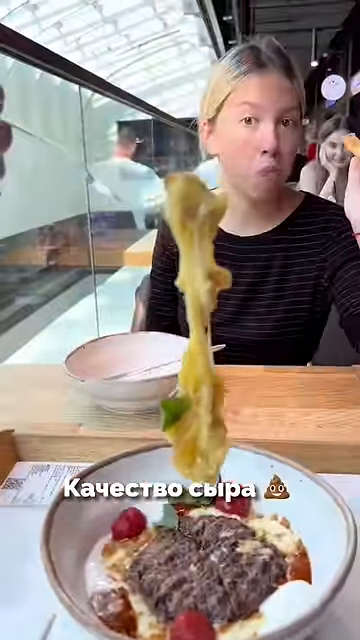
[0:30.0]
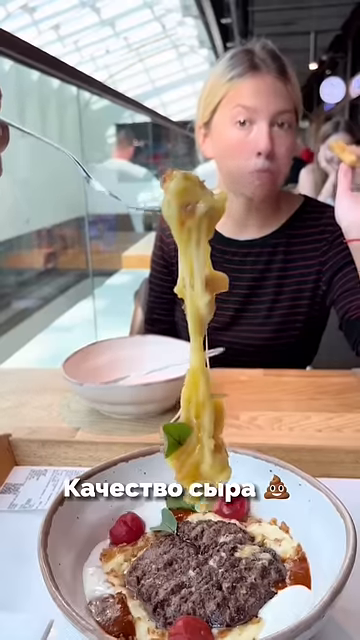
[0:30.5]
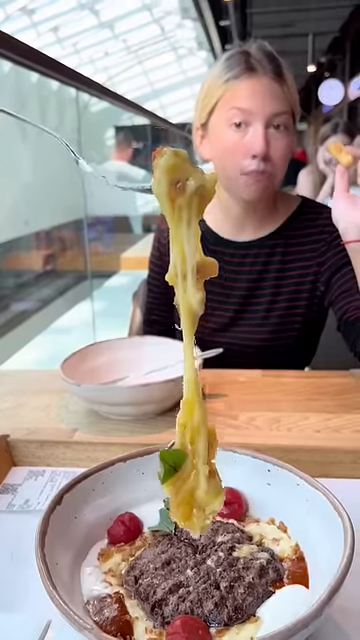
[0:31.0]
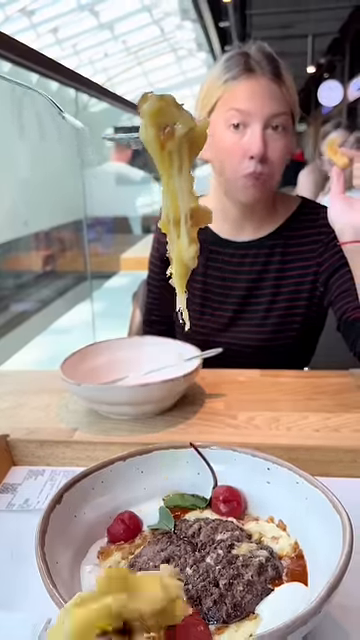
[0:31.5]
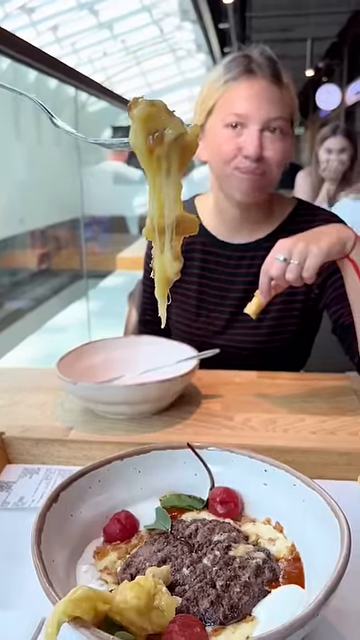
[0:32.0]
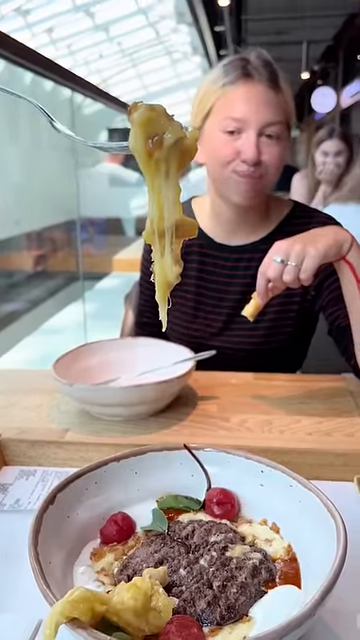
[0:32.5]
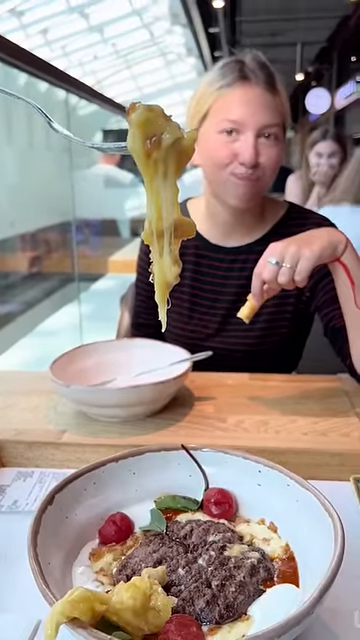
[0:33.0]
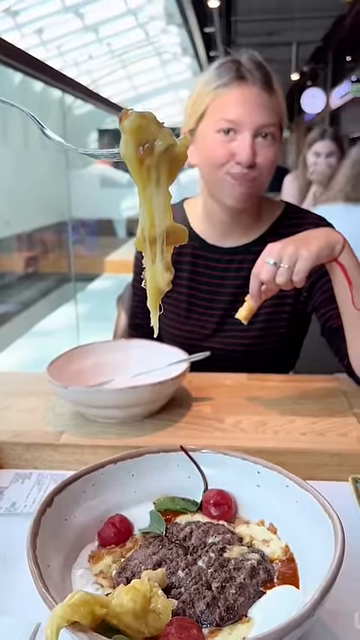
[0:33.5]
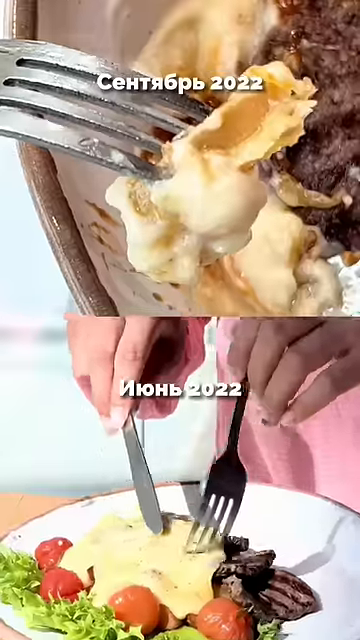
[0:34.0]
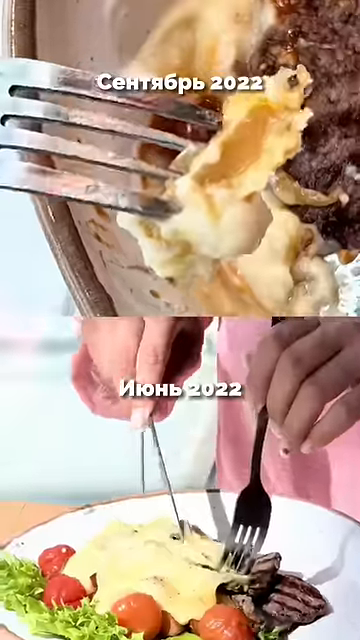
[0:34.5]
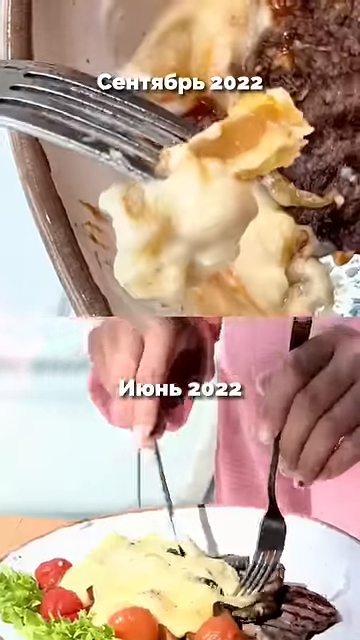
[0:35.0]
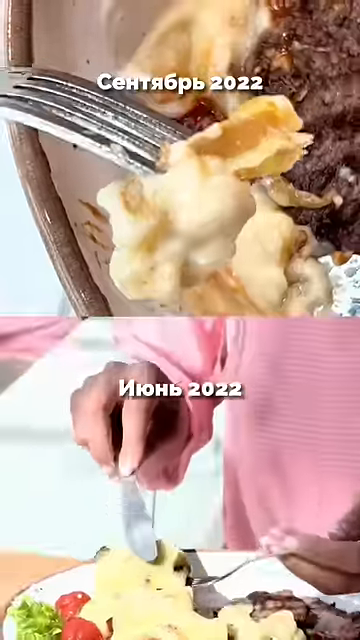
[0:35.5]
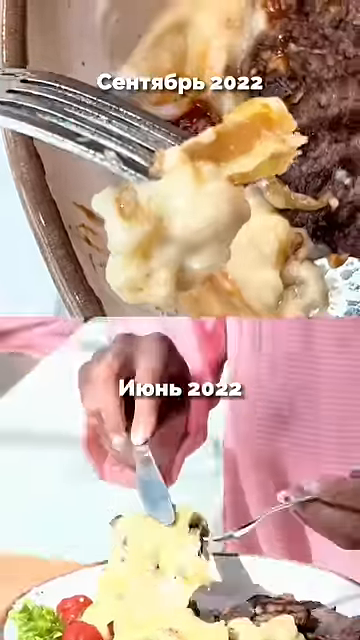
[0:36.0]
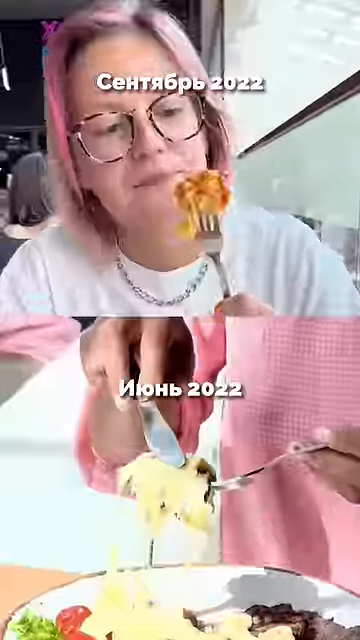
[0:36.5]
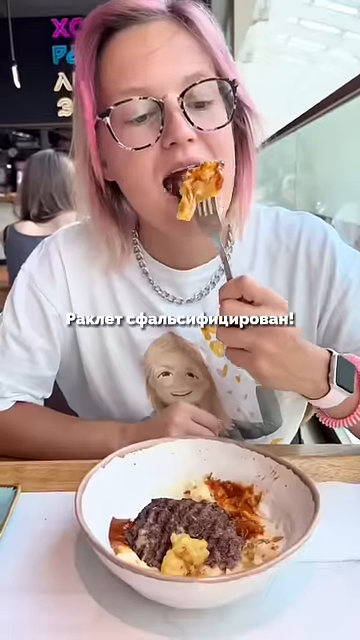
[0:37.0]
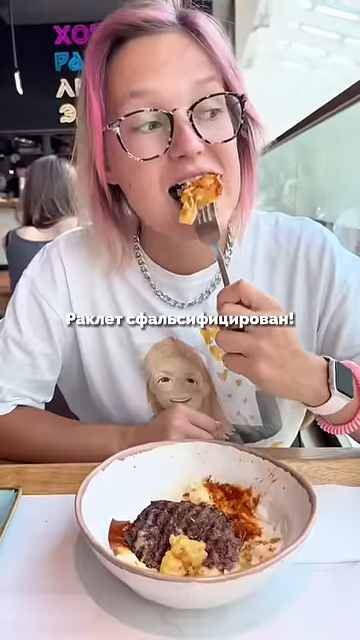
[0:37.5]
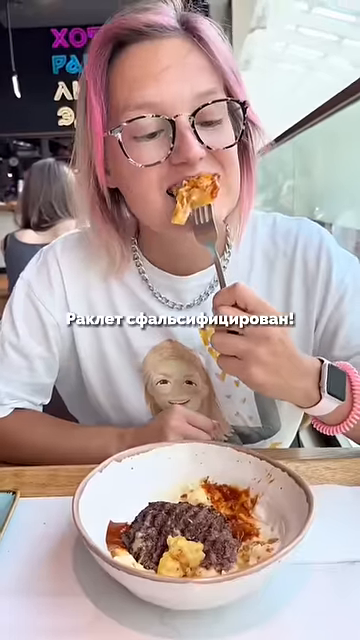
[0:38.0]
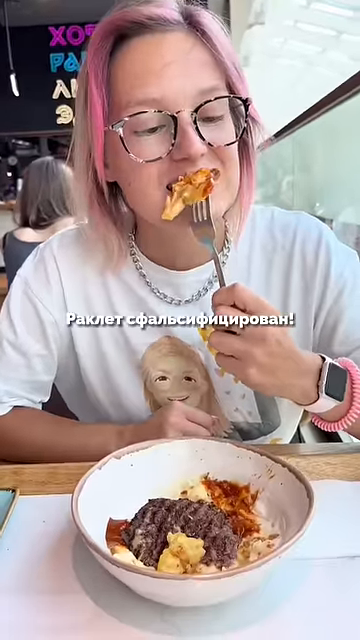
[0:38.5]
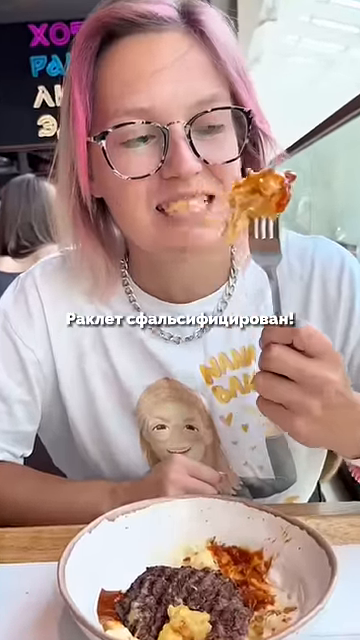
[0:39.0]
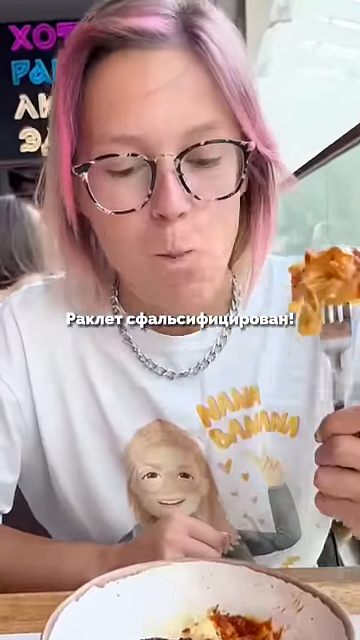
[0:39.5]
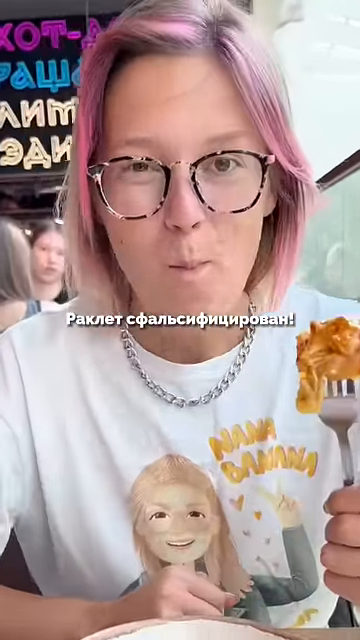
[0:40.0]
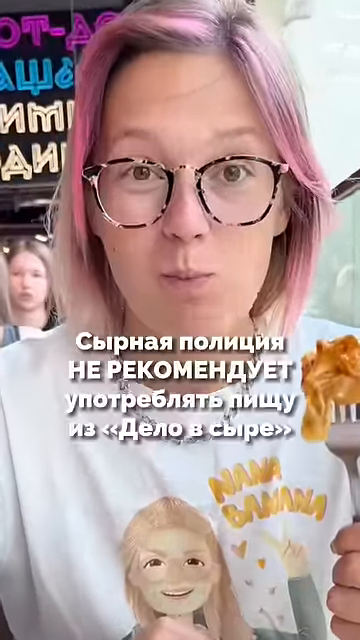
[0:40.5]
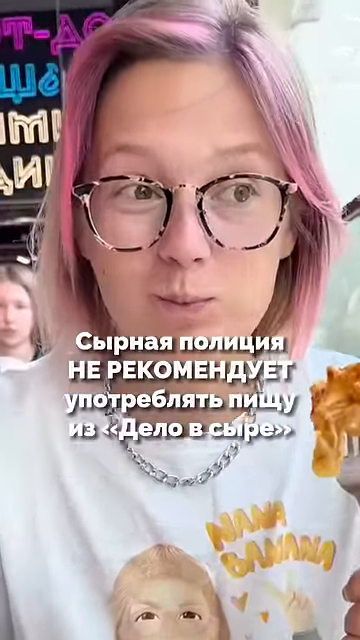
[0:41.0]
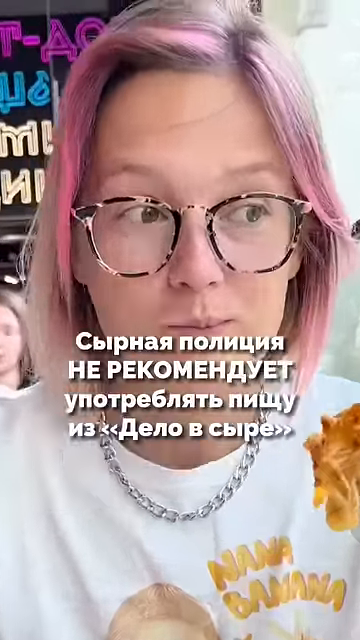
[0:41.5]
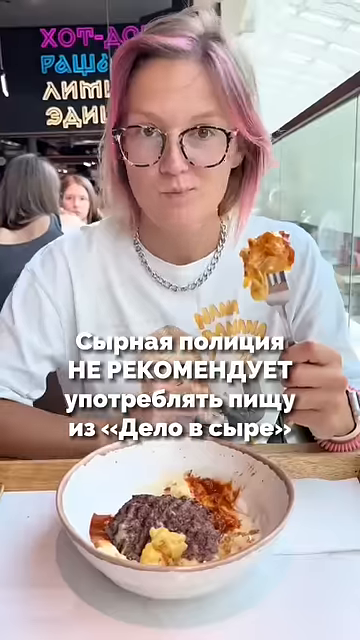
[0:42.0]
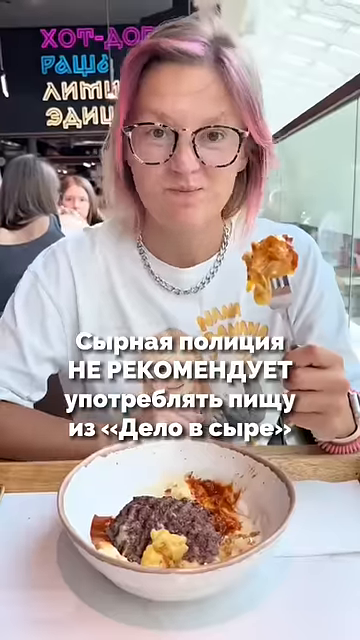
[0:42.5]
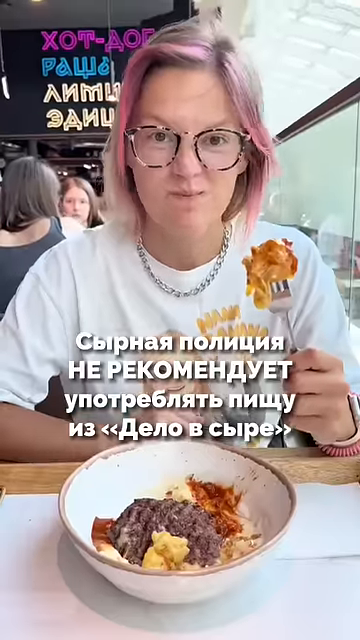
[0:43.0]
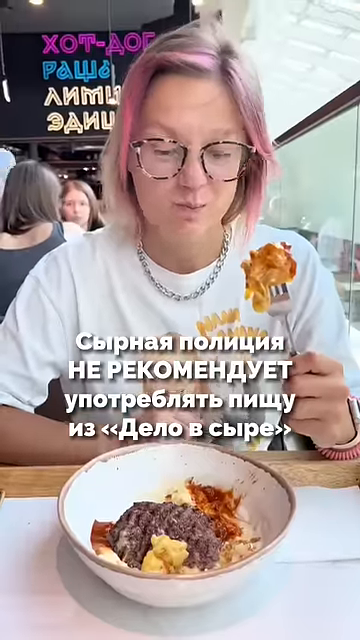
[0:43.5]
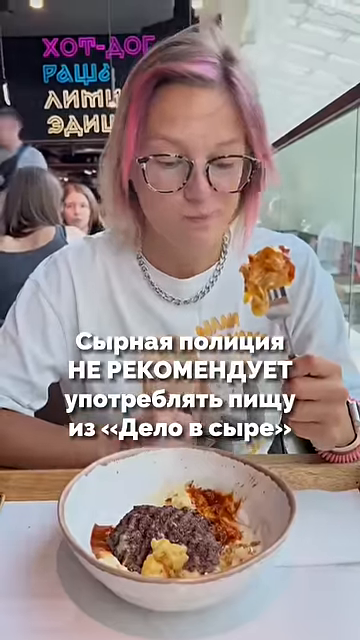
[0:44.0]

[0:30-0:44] Two people of Caucasian descent, two girls, are sitting and eating at a restaurant table. A bowl of food on the table holds a piece of meat and a piece of cheese. The girl with glasses, which are very fancy with different colors across them, appears not that satisfied with the food and seems to be having second thoughts about eating at this restaurant. She nods her head in disgust, indicating she does not like the taste. The girl across from her also shakes her head, indicating she does not like the food either. The girl takes a bite of the cheese part of her plate.